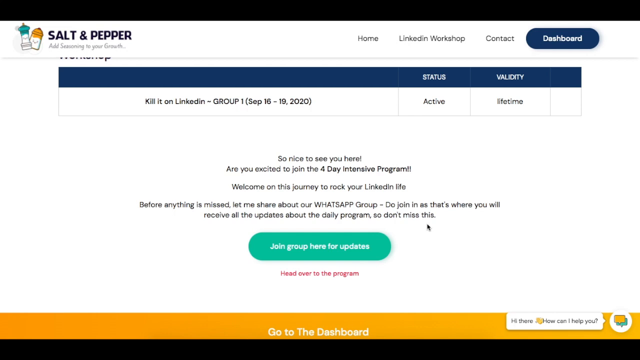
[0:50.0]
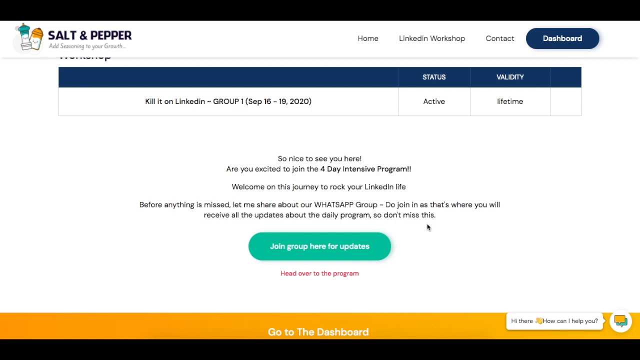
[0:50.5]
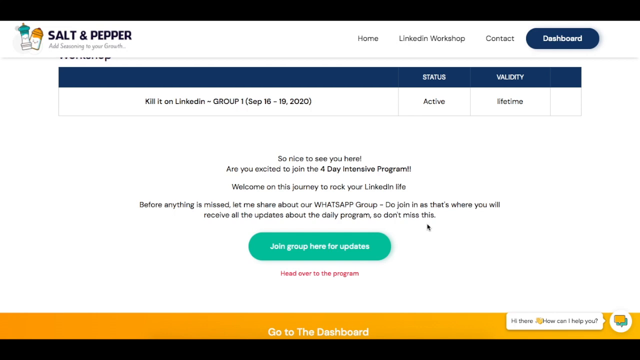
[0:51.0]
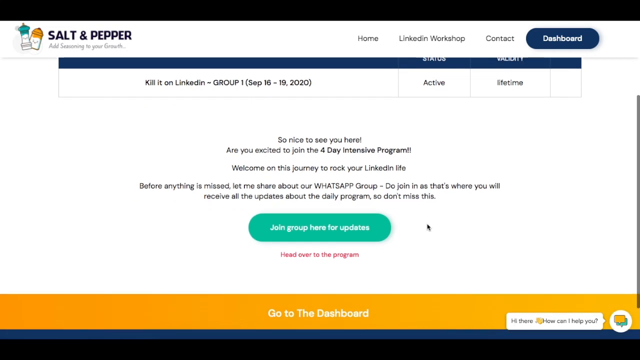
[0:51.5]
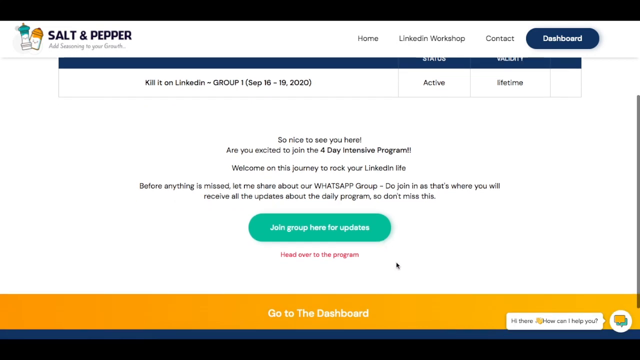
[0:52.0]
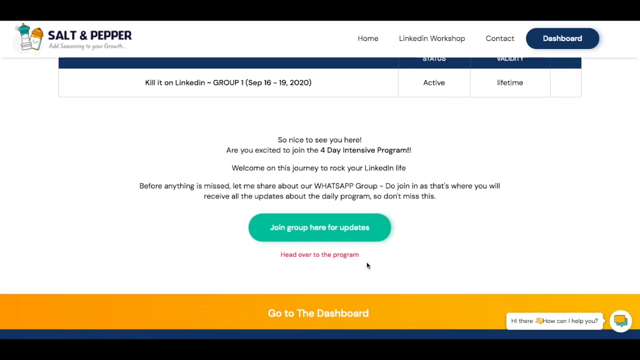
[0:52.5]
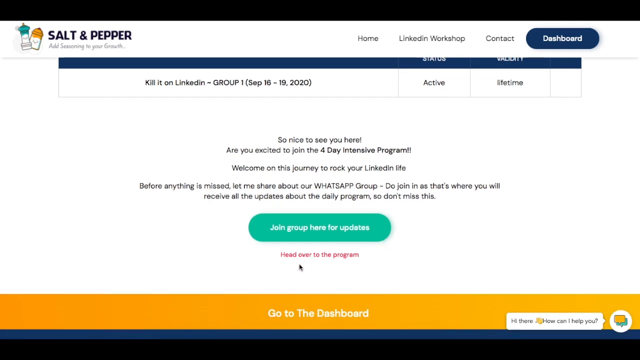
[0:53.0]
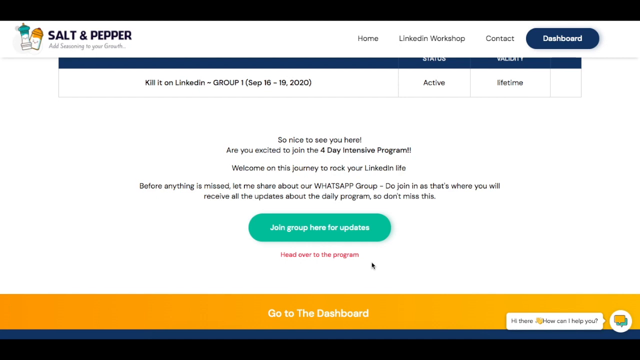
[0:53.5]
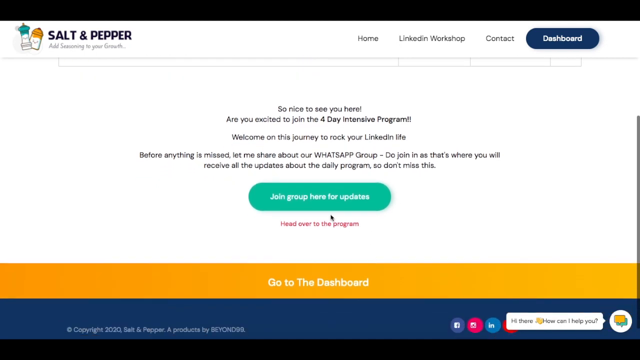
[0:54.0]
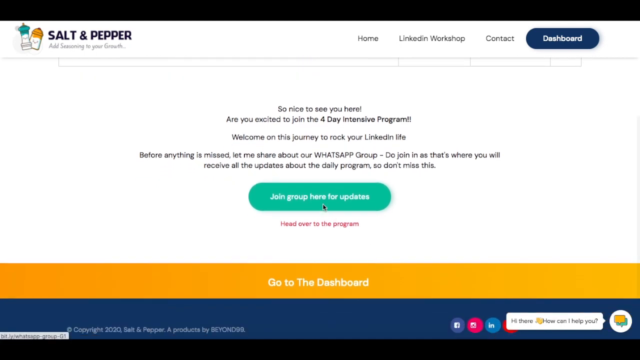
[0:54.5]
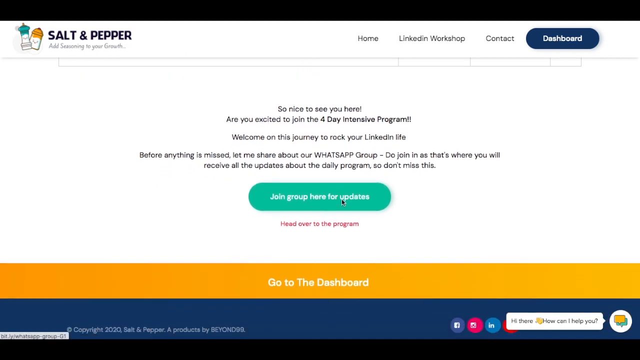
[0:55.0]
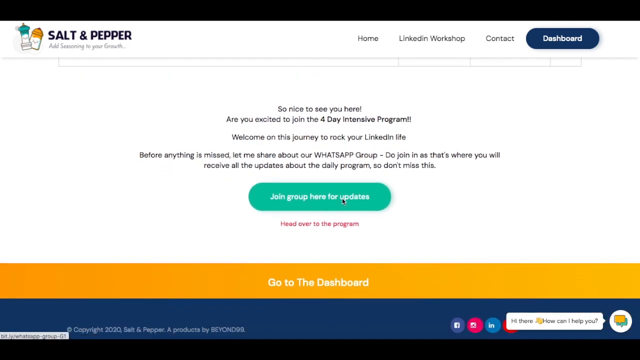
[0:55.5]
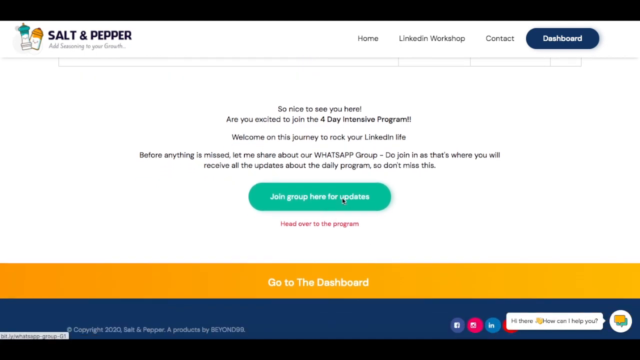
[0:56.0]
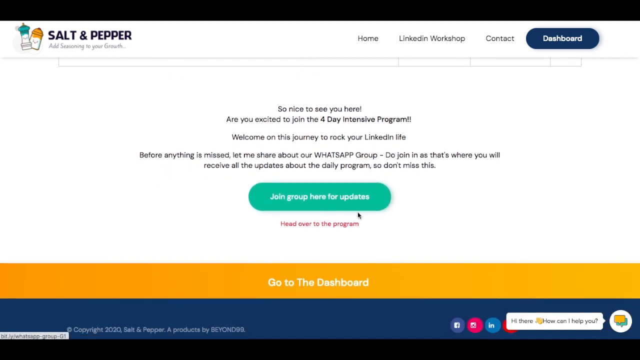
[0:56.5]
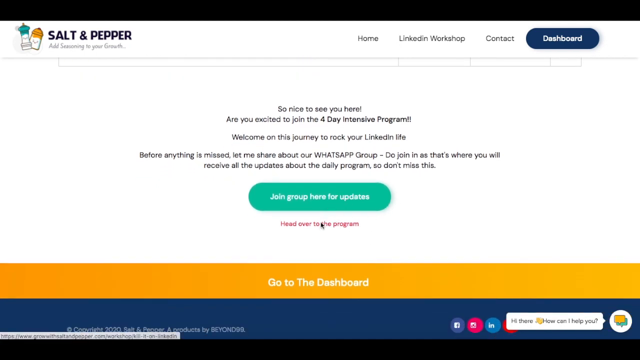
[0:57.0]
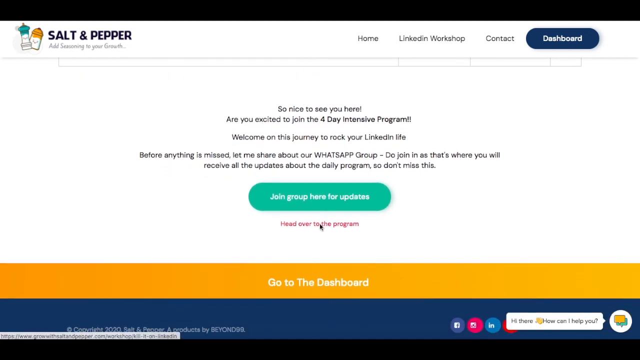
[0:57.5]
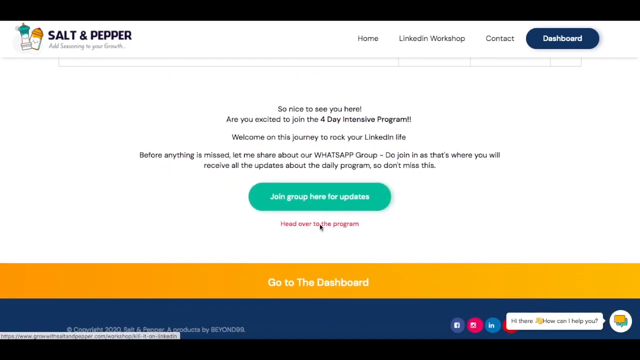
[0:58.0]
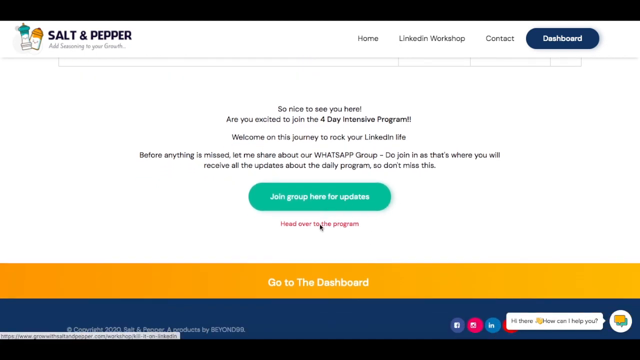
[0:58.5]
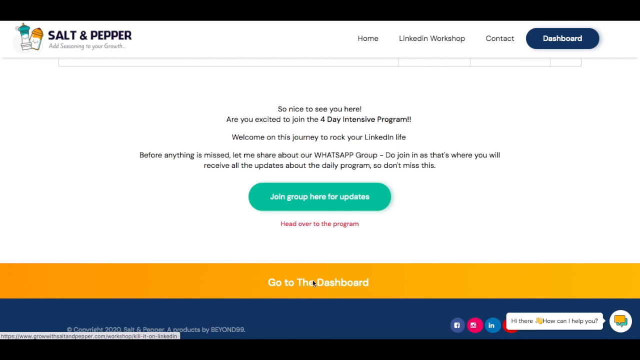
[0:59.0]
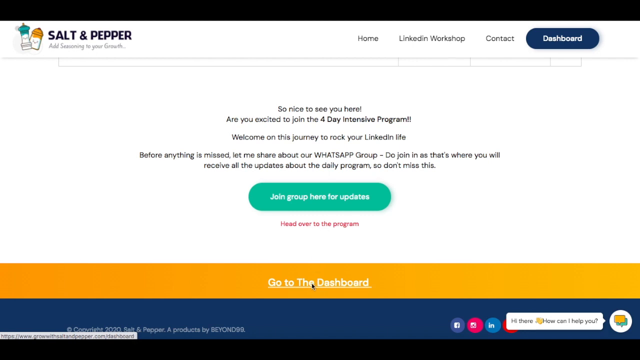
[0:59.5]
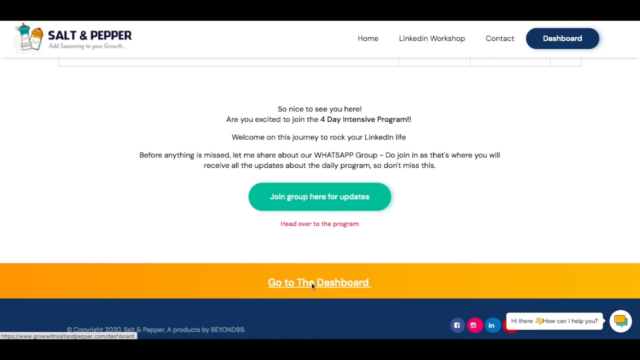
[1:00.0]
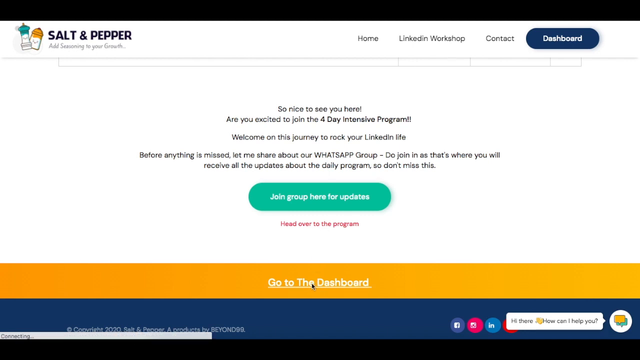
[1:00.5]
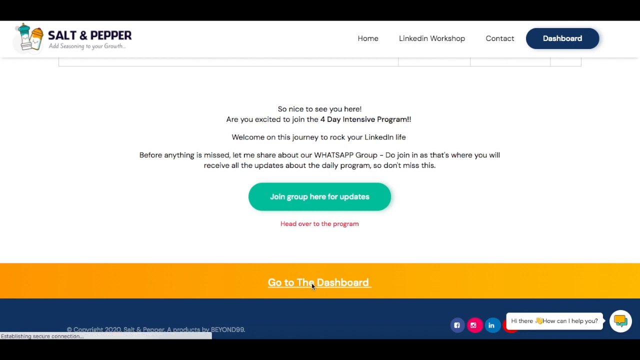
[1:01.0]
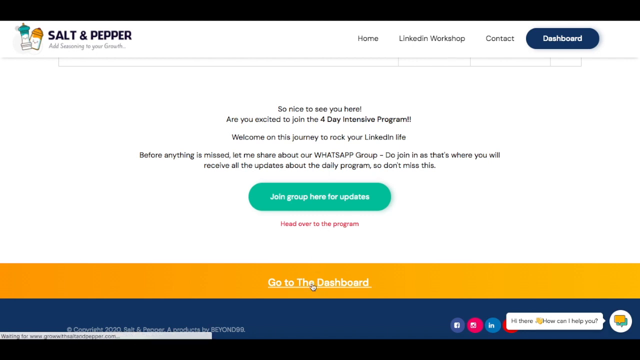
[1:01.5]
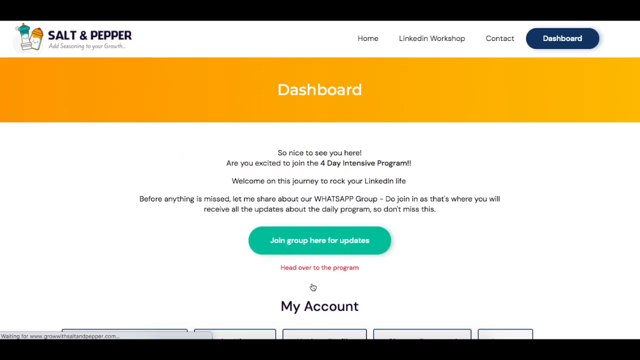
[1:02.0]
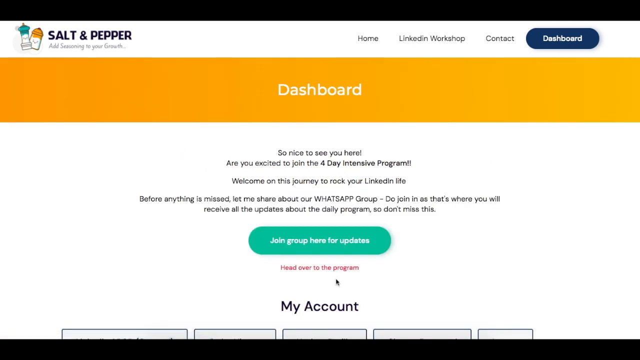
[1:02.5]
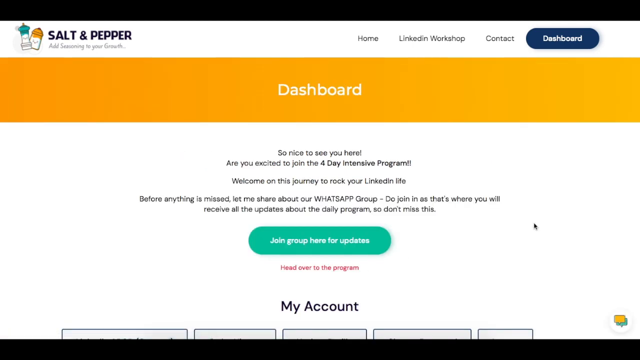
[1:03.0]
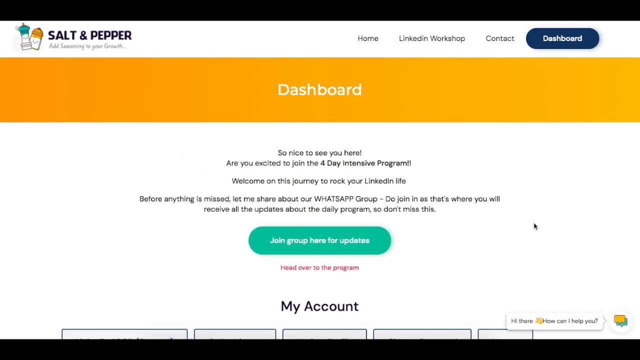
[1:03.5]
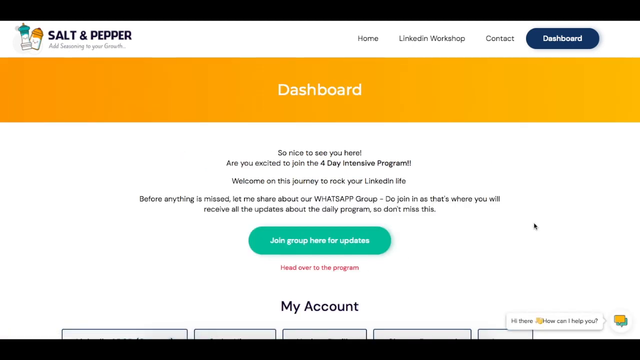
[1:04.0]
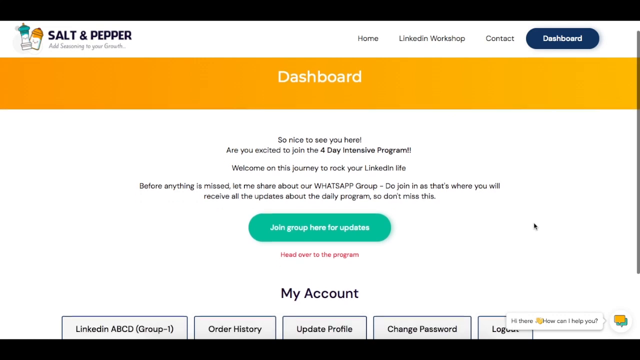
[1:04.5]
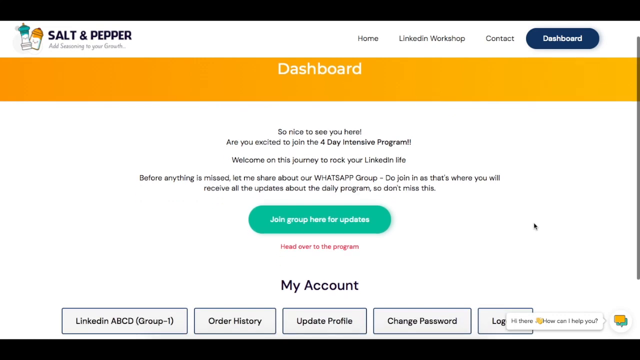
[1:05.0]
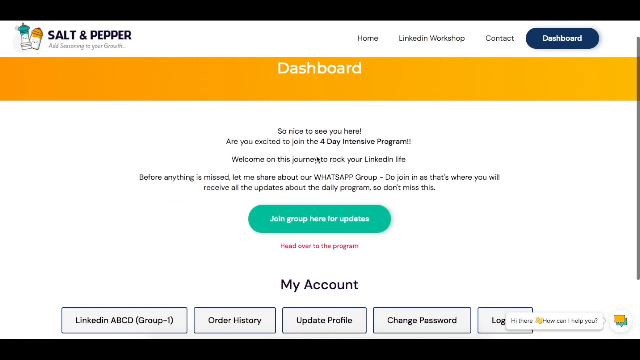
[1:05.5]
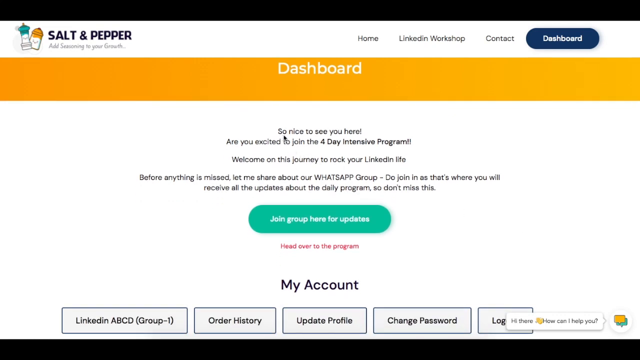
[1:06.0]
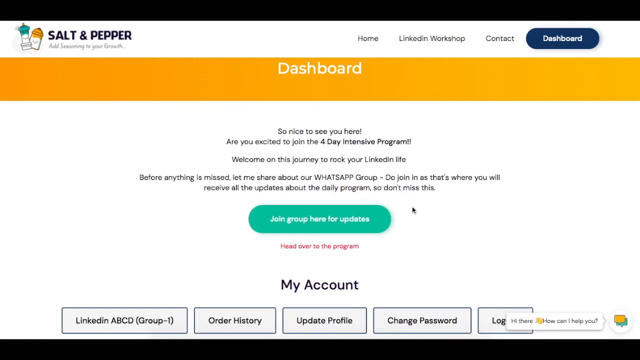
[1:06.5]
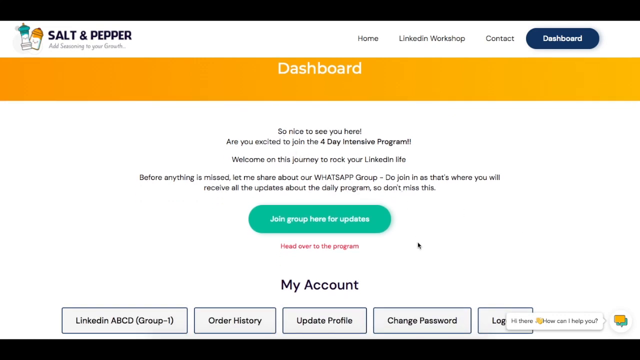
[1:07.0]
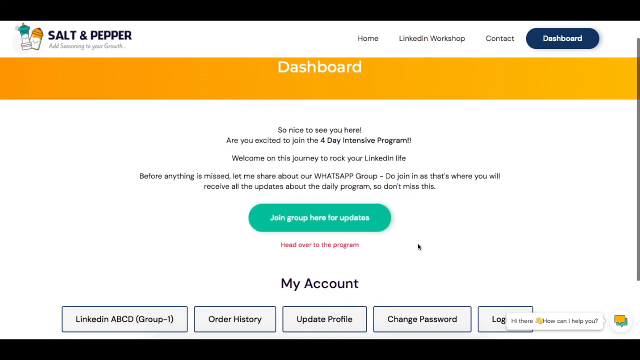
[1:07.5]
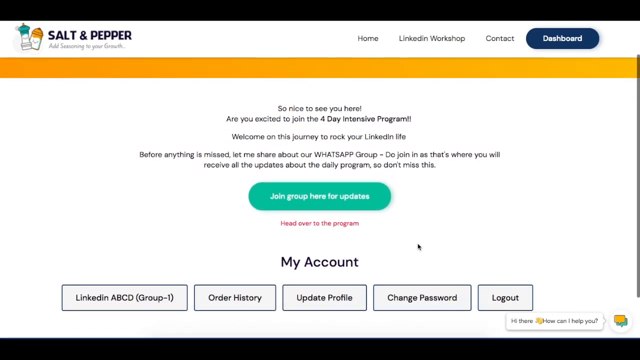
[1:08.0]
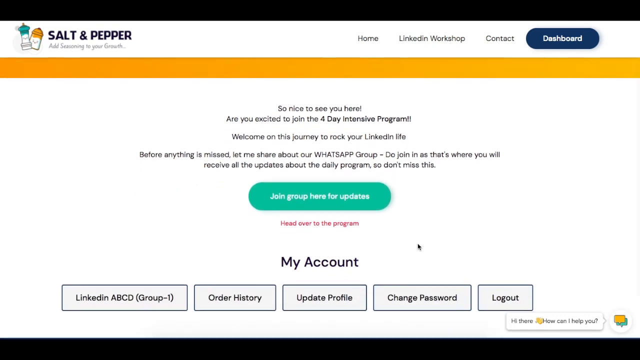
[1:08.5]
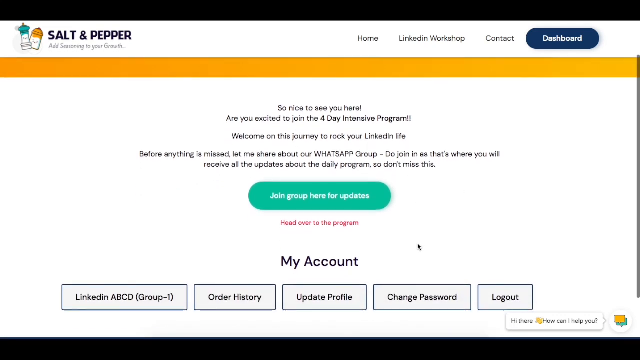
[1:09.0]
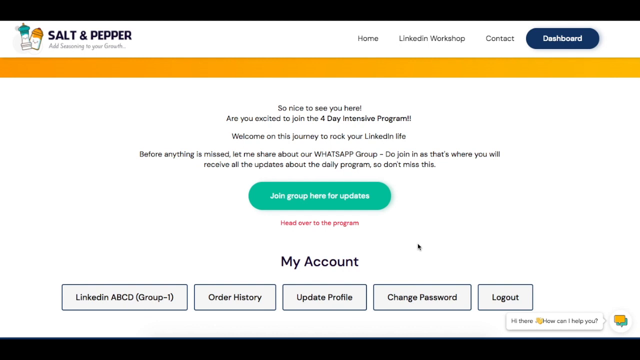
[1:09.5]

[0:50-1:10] The cursor moves and scrolls over a clickable tab that reads "join group here for updates." It then moves below it and sits on top of a clickable title that reads "head over to the program," and then moves further down to an area that reads "go to my dashboard." The cursor clicks "go to my dashboard," which advances to the account's dashboard. The dashboard shows the message "so nice to meet you here. Are you excited to join the 4-Day Intensive Program? Welcome on this journey to rock your LinkedIn life. Before anything is missed, let me share about our WhatsApp group. Do join as that is where you'll receive all the updates about the daily program, so don't miss this." The cursor scans over the top of the text without clicking, apparently to make sure the viewer notices these features.